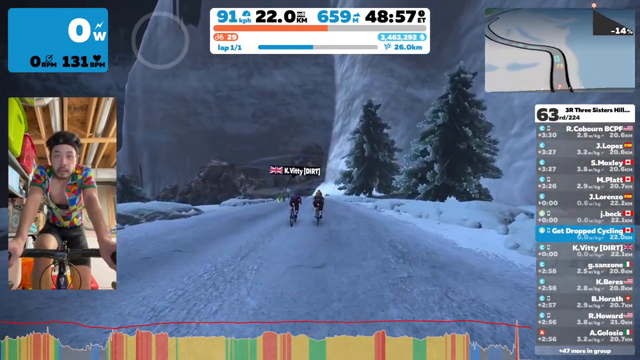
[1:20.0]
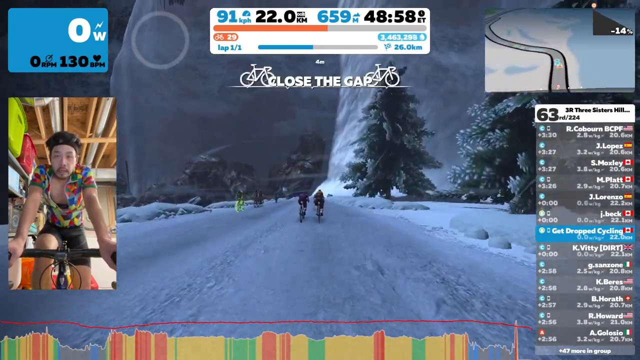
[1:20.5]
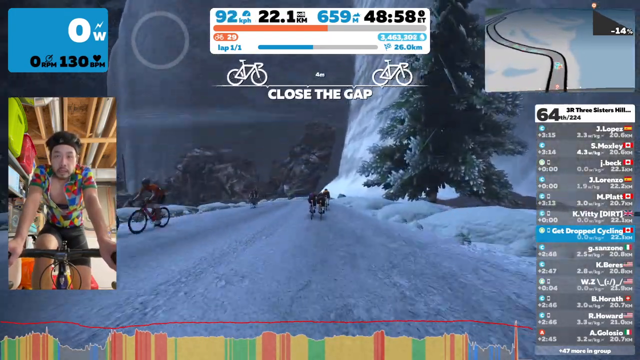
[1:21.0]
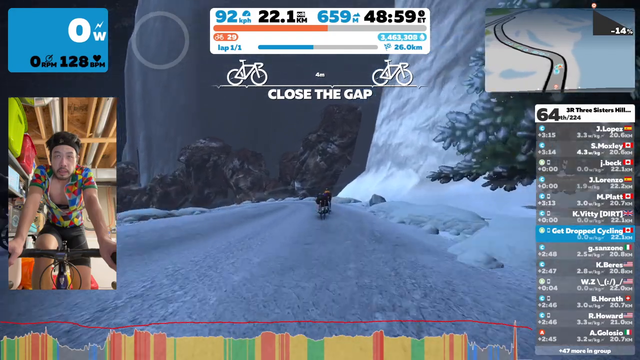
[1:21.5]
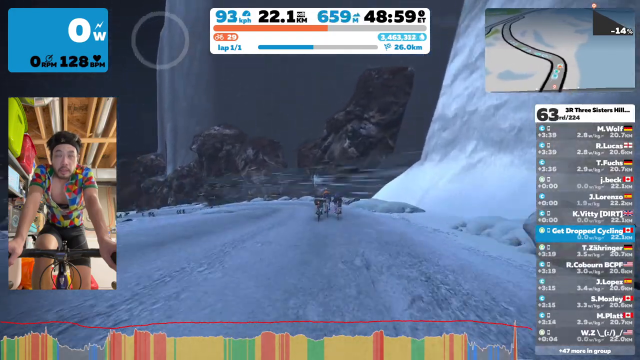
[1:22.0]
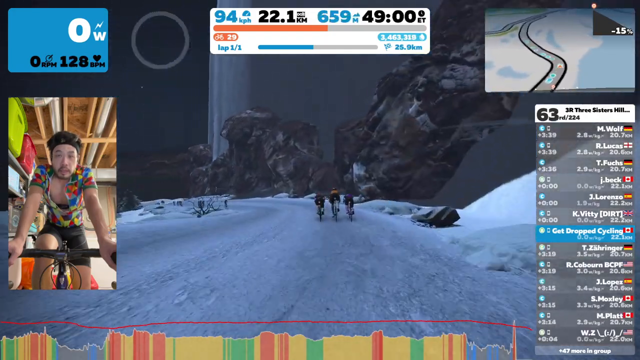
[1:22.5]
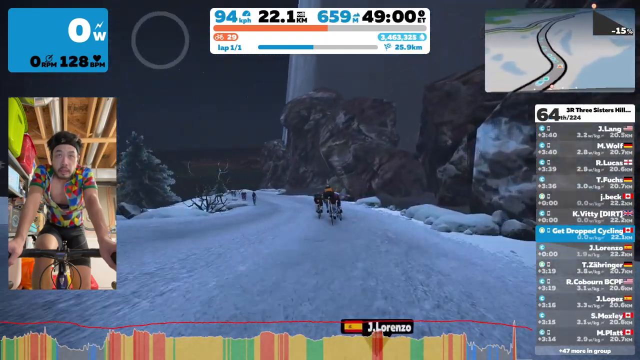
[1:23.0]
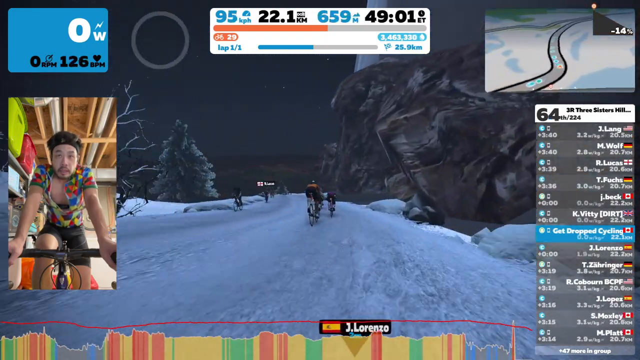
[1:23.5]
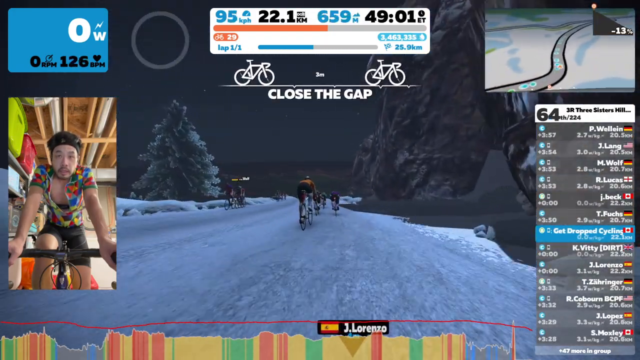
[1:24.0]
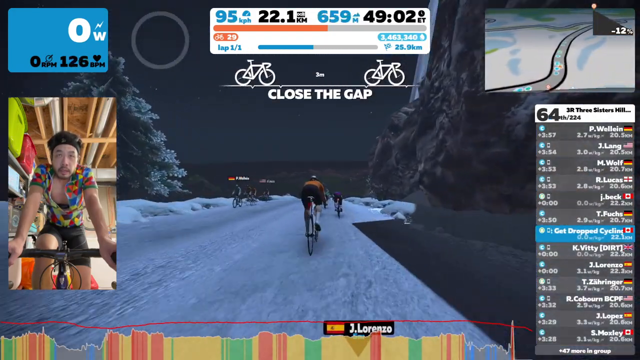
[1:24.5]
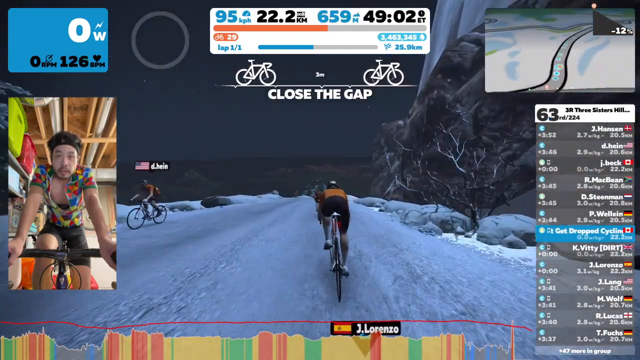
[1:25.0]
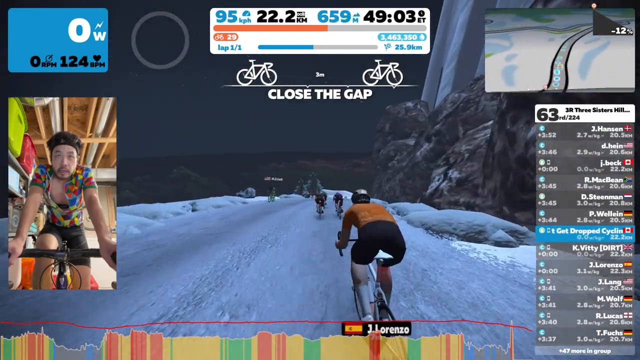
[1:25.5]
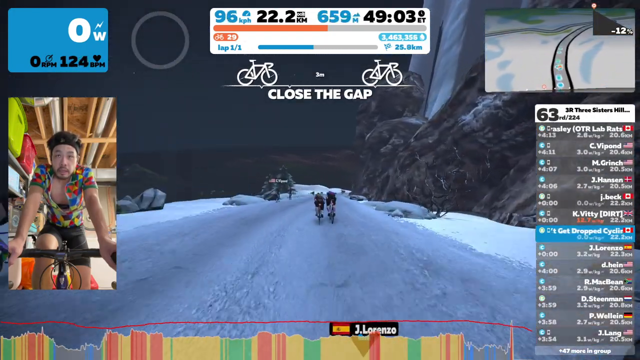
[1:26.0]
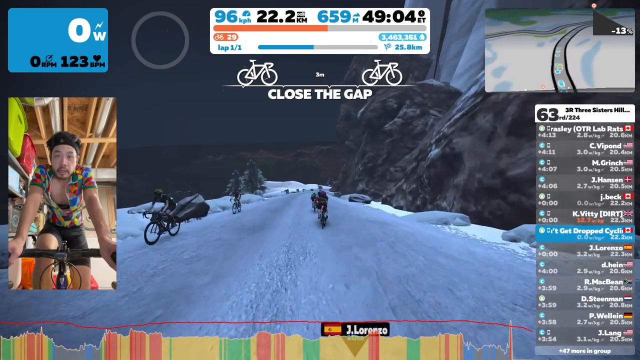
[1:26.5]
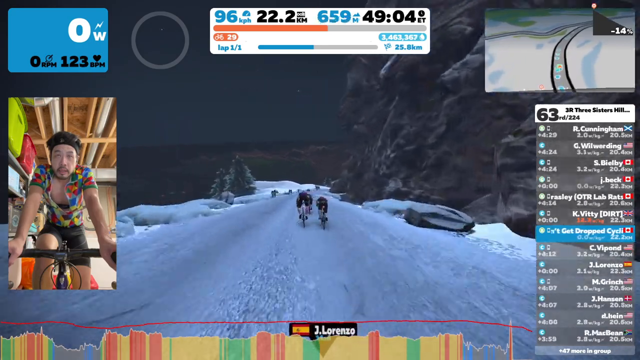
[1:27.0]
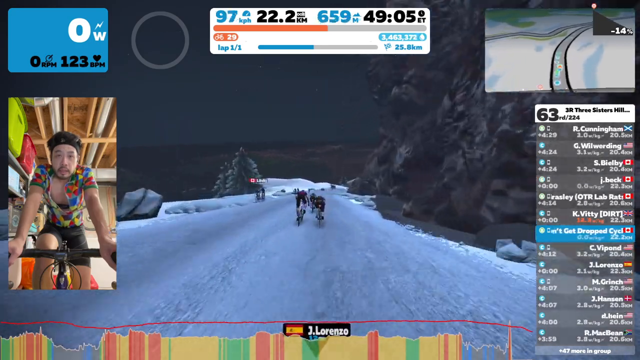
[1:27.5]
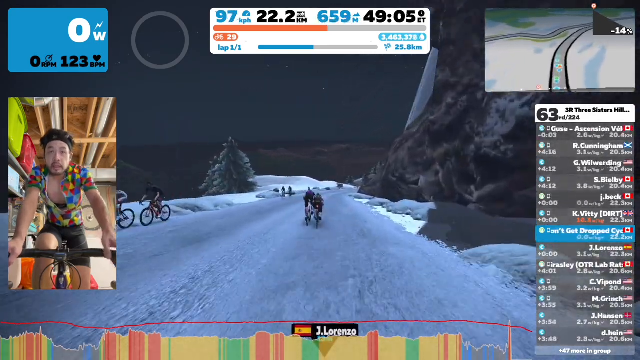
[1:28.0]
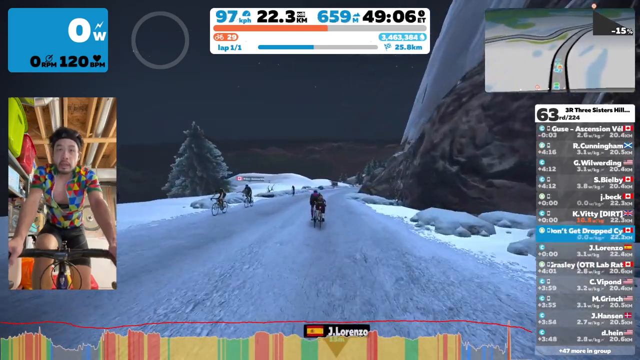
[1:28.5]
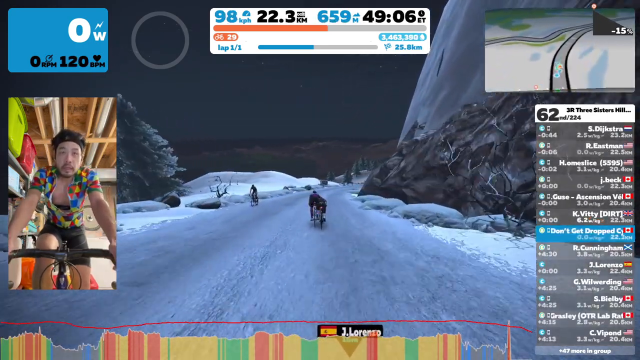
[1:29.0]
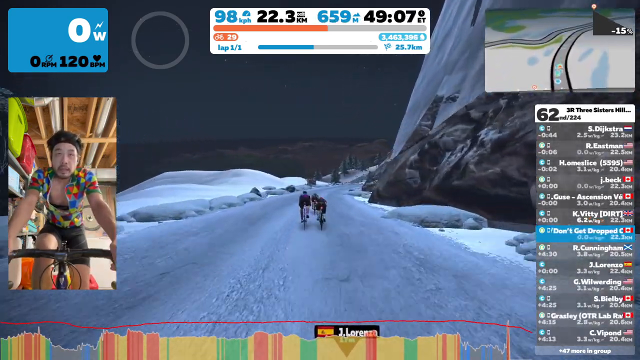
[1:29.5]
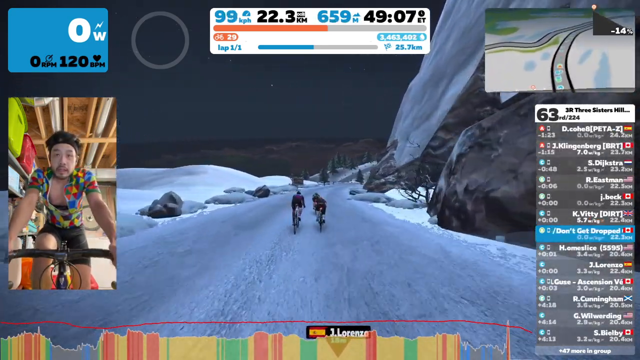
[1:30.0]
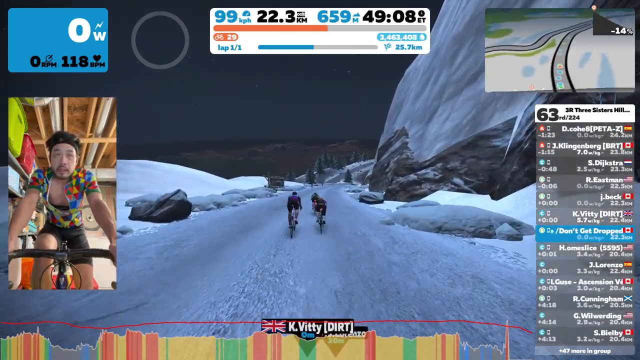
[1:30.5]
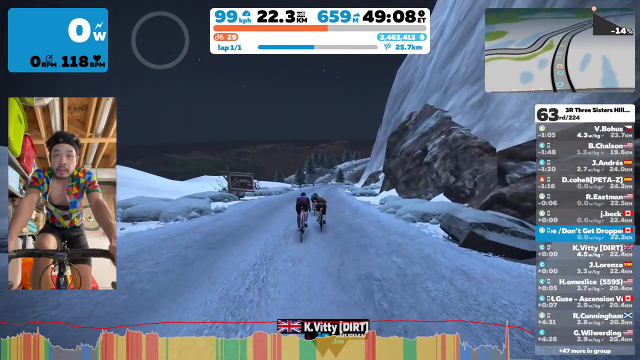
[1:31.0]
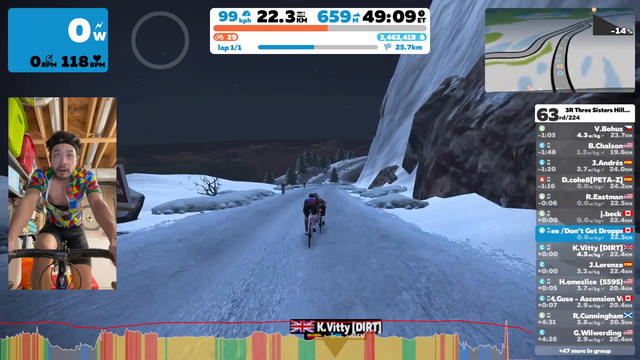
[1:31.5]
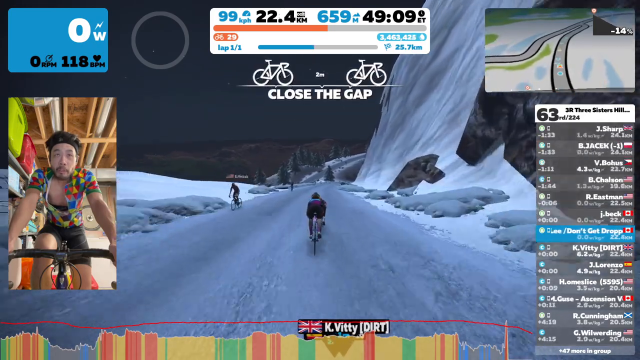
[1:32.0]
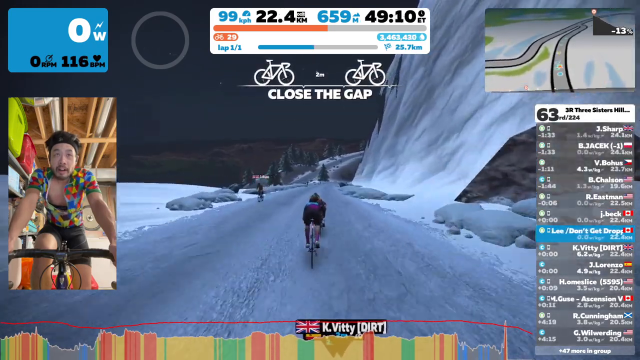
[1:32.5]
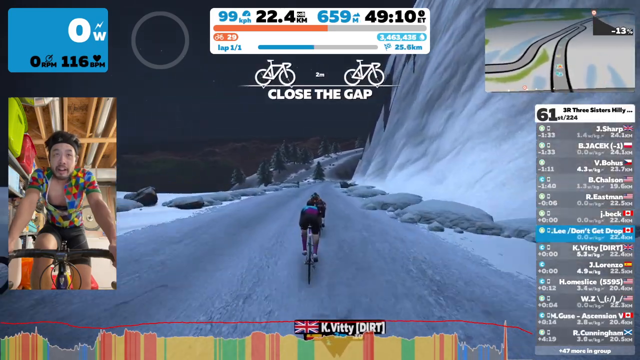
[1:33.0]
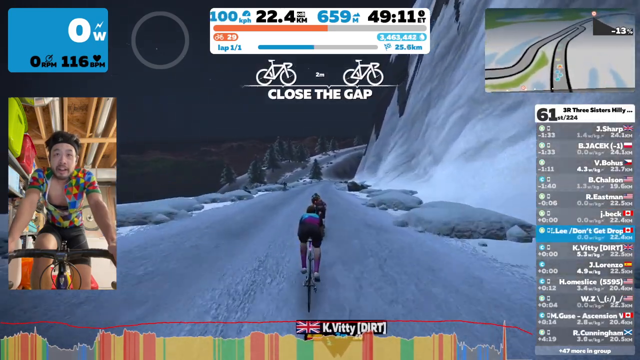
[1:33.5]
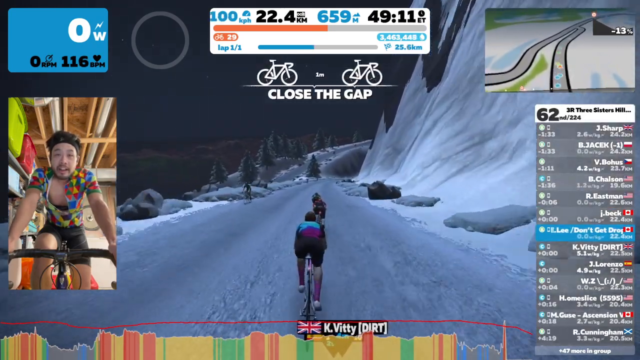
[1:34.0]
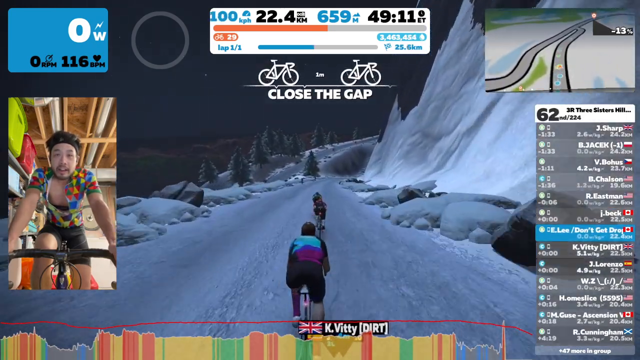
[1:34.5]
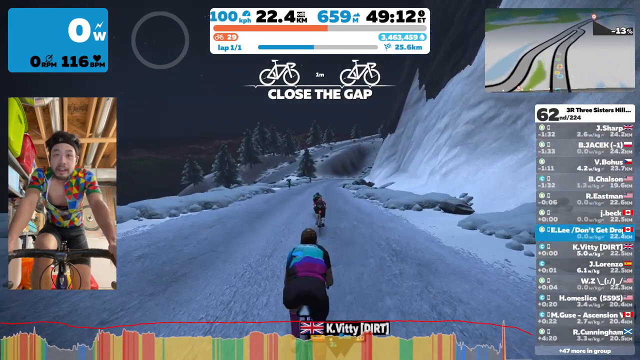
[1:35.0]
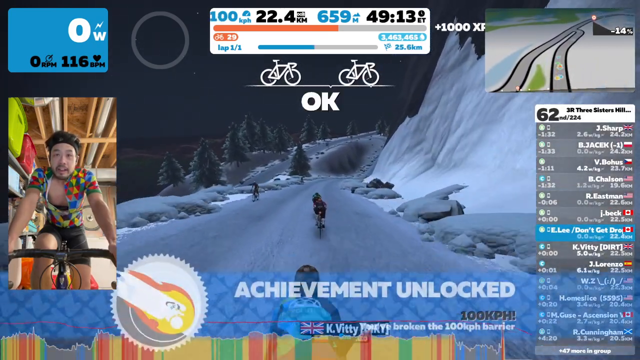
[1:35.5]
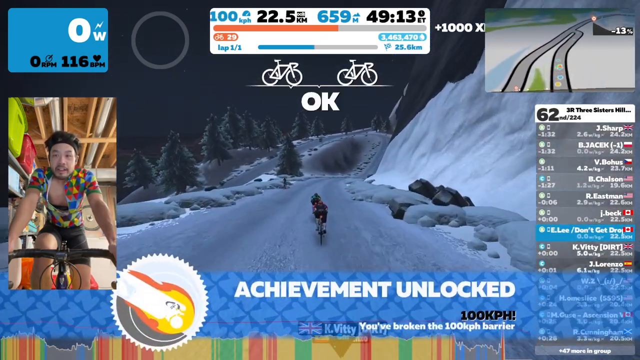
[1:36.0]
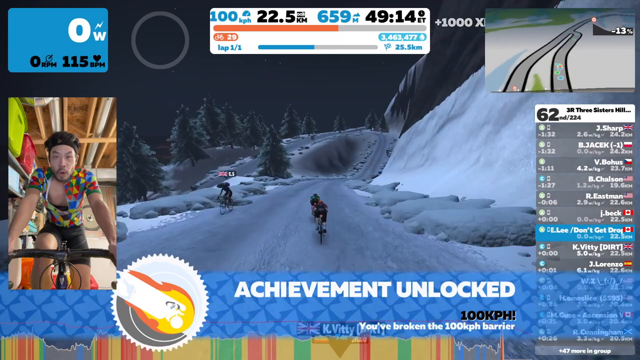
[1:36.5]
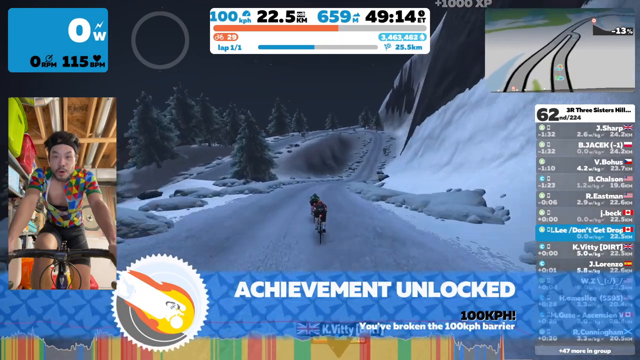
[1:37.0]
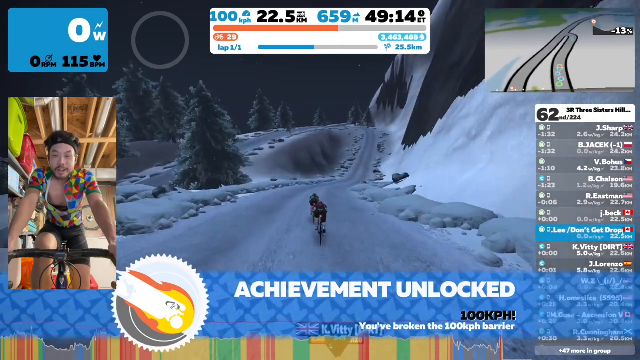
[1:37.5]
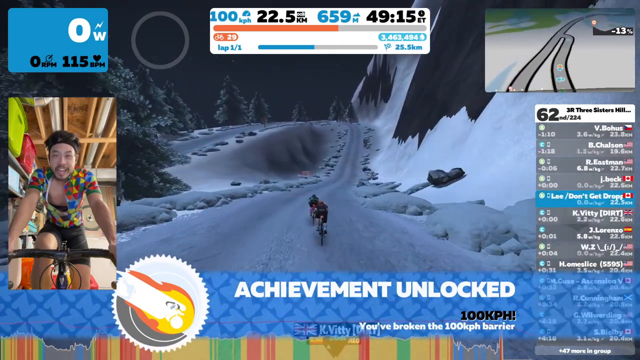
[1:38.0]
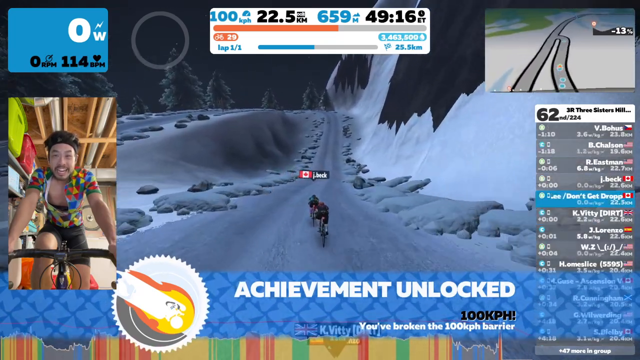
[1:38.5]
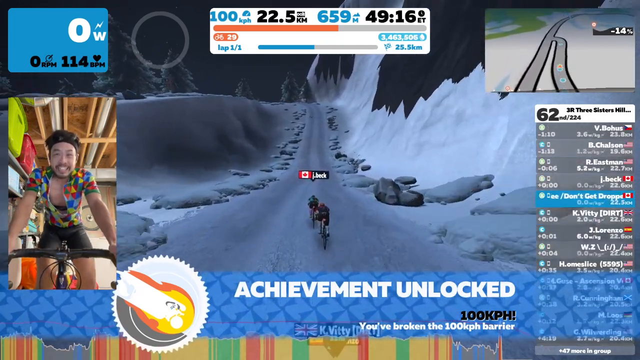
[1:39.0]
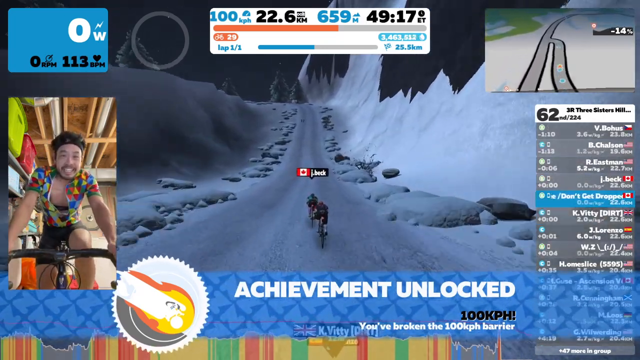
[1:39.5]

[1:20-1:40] The bicyclist continues down a hill while the player on the left side has stopped pedaling. He seems to be just steering and controlling his game character, who is in 7th place, as shown below the map. The player concentrates on guiding his character down the mountain. "close the gap" appears on the screen with two bicycle sketches on the left and right, which move toward each other. Below that, "achievement unlocked" appears, and "100kph" is shown in black text. The player appears happy; he opens his mouth, still not pedaling and holding the handlebars with each hand, then smiles and begins to pedal again.